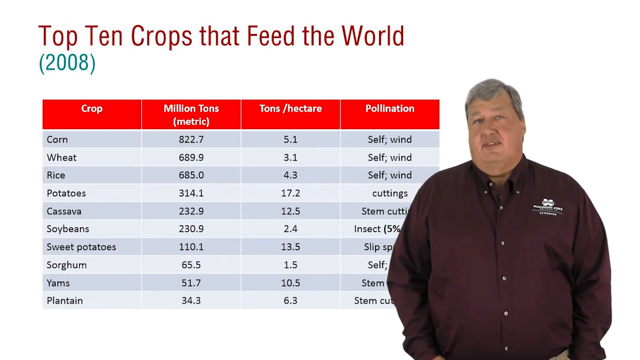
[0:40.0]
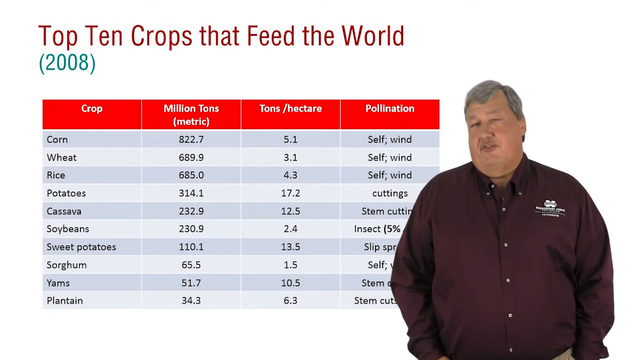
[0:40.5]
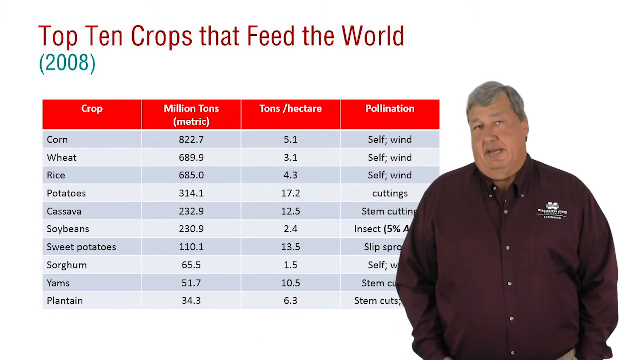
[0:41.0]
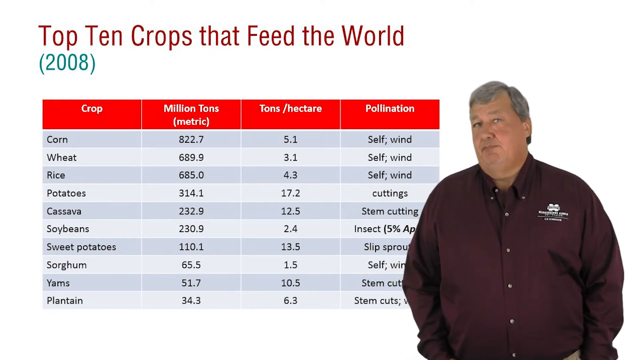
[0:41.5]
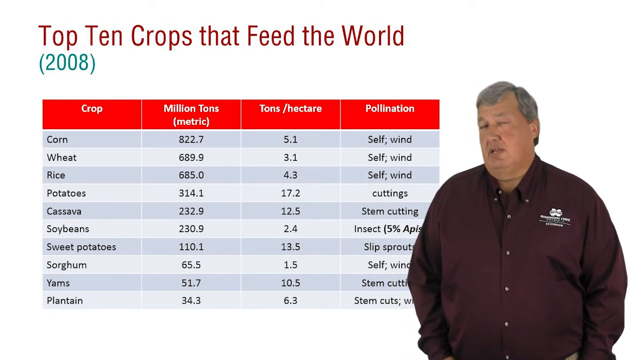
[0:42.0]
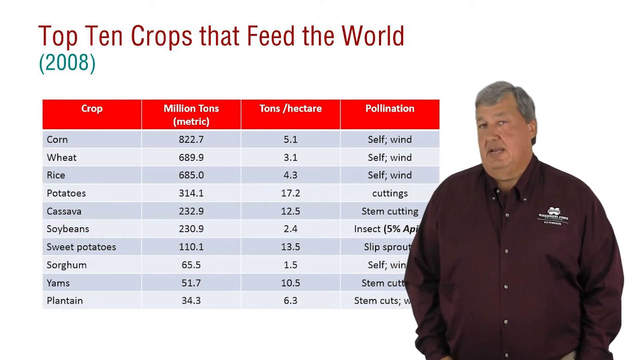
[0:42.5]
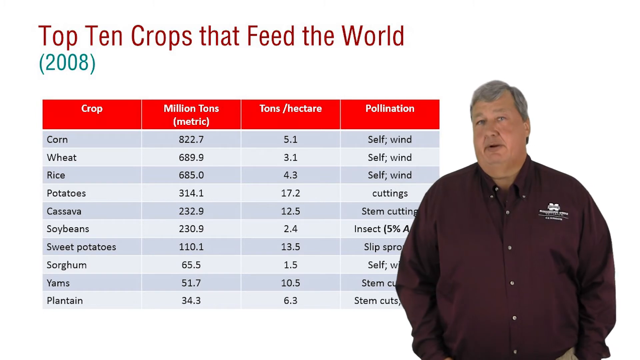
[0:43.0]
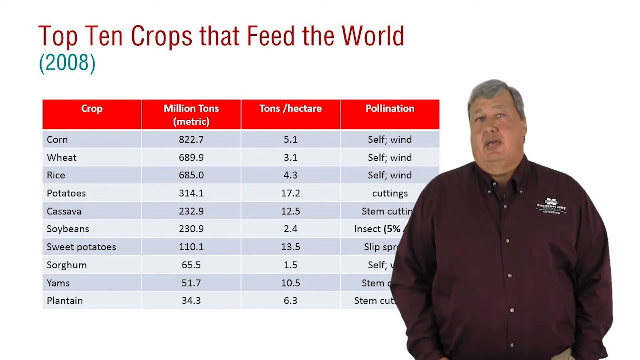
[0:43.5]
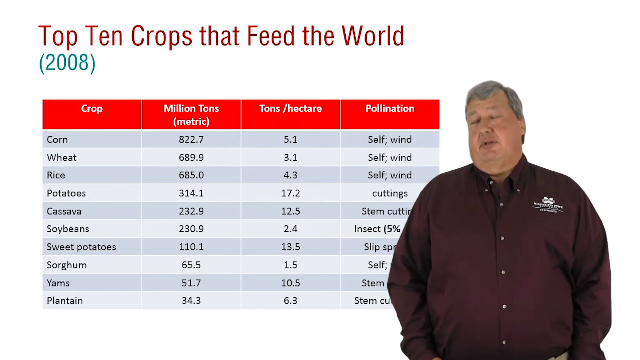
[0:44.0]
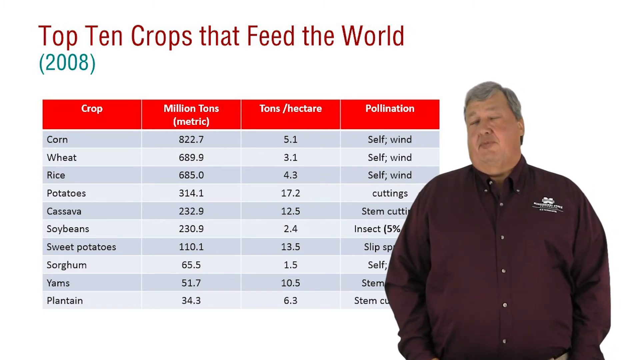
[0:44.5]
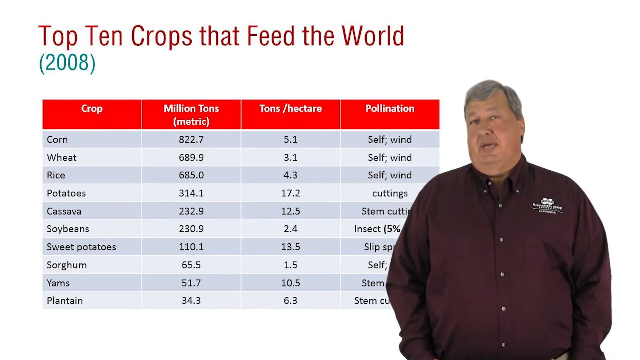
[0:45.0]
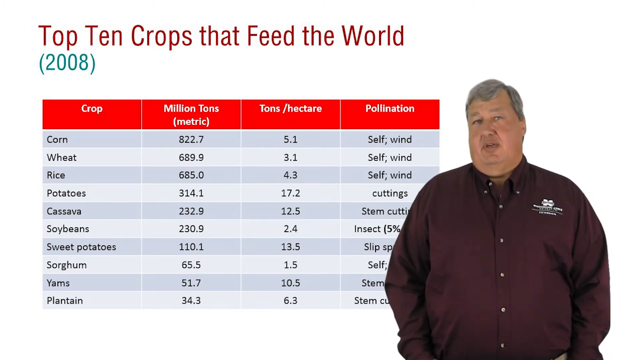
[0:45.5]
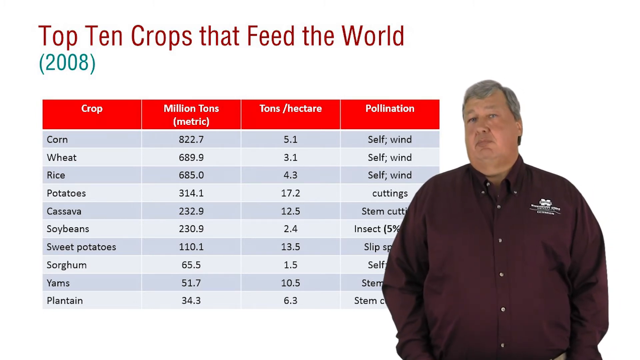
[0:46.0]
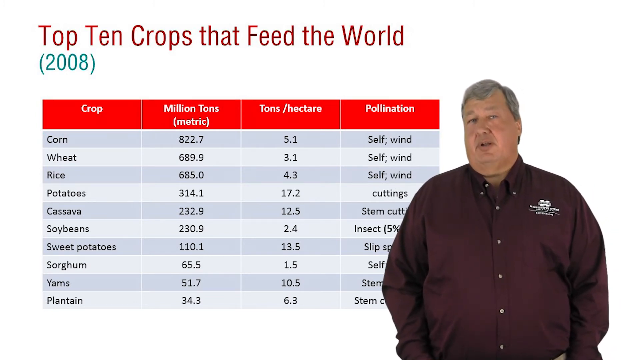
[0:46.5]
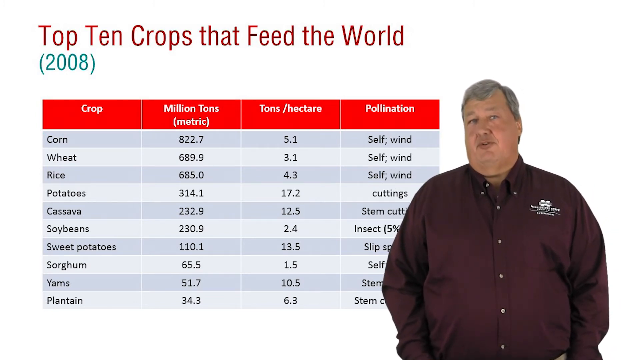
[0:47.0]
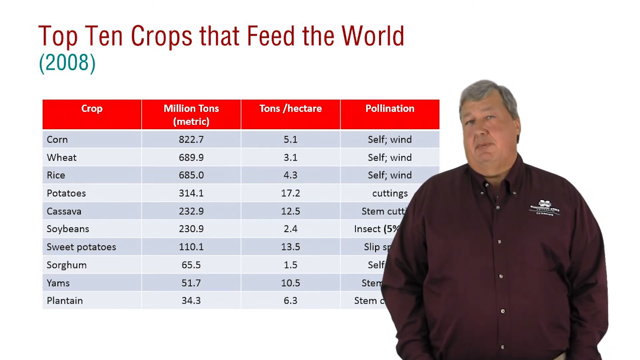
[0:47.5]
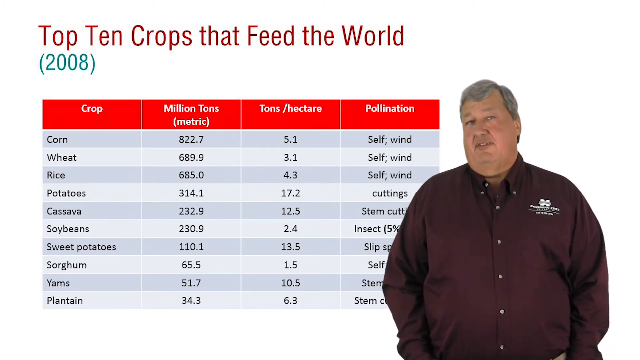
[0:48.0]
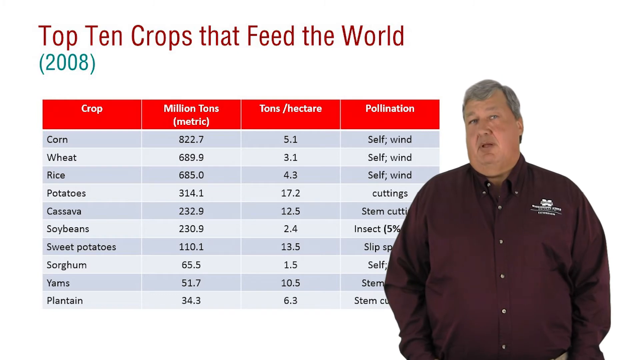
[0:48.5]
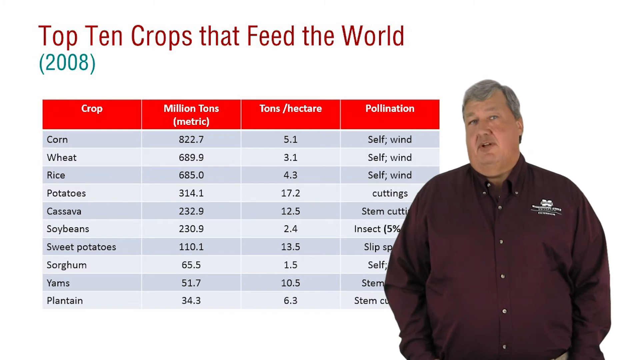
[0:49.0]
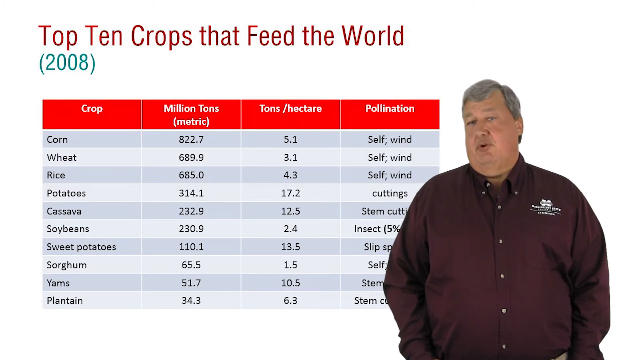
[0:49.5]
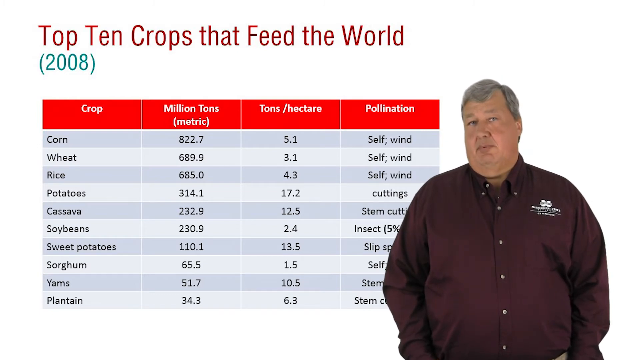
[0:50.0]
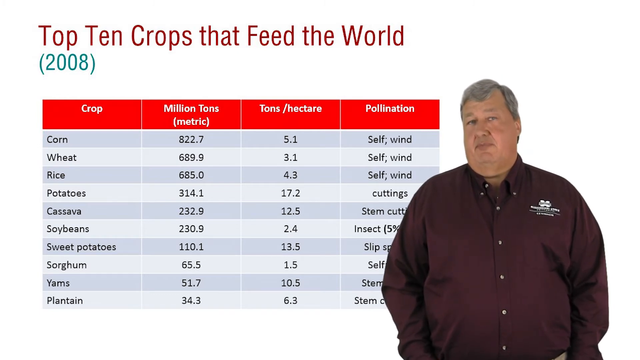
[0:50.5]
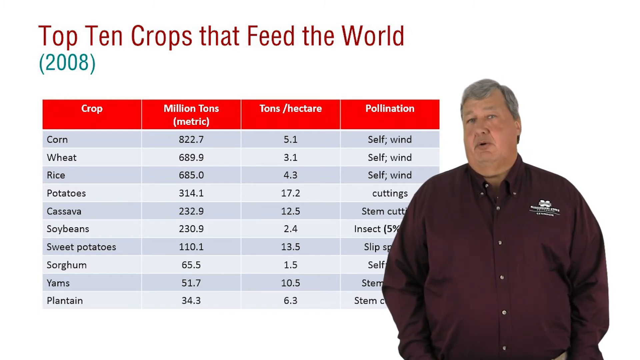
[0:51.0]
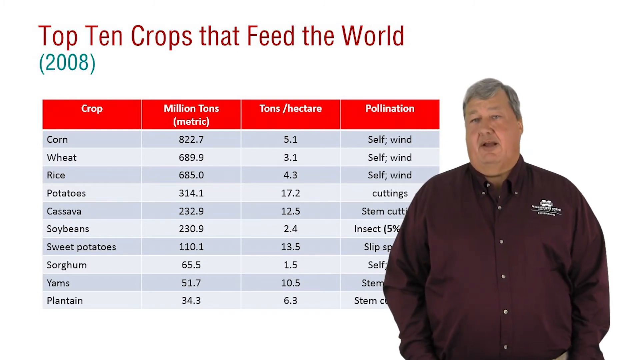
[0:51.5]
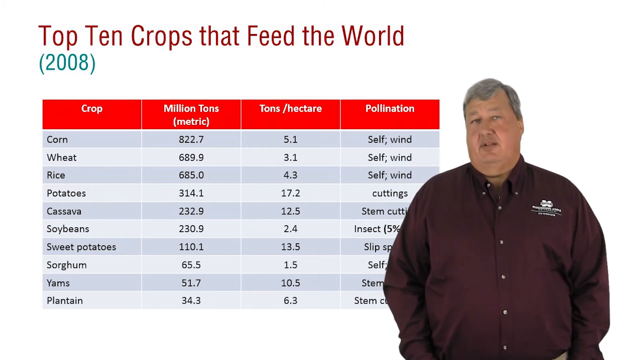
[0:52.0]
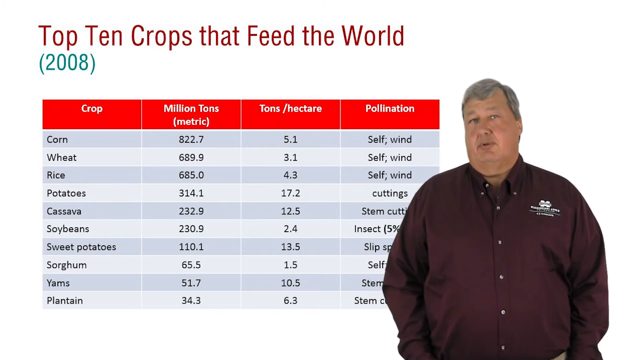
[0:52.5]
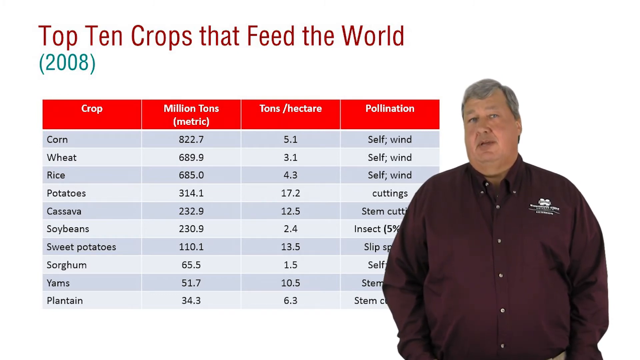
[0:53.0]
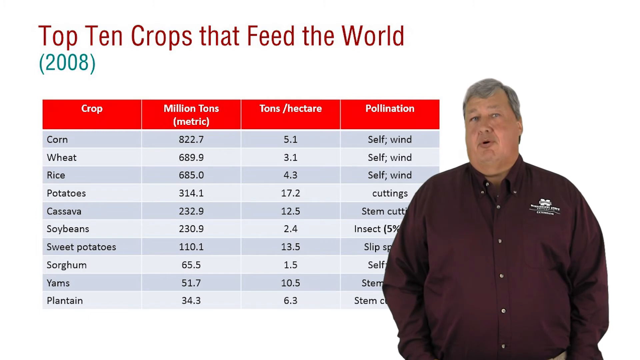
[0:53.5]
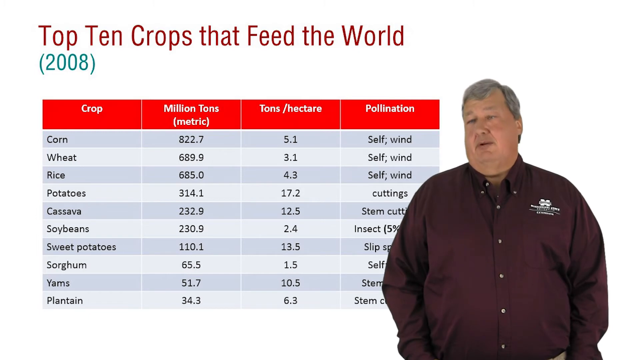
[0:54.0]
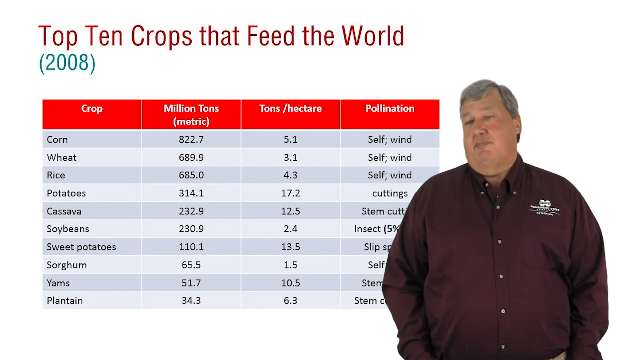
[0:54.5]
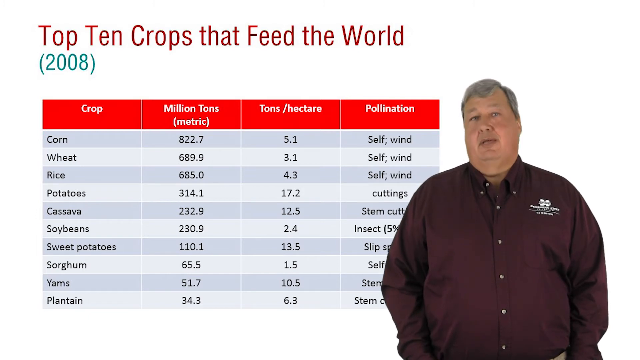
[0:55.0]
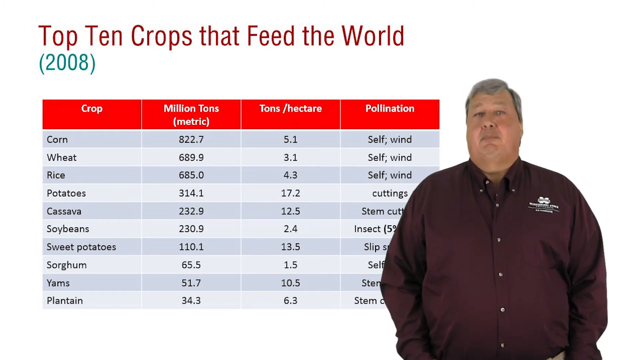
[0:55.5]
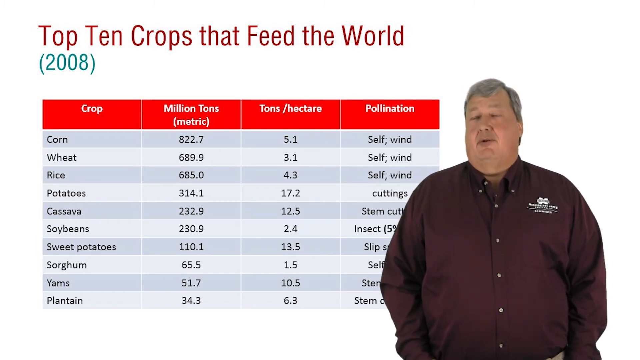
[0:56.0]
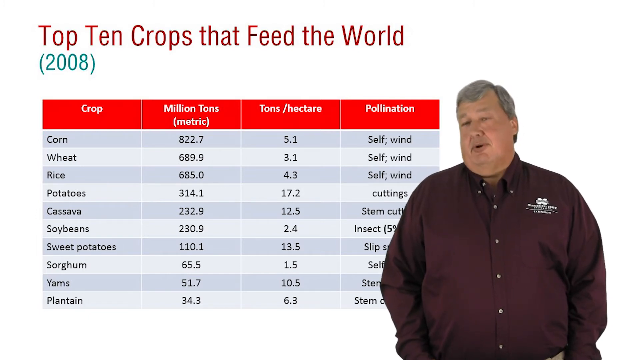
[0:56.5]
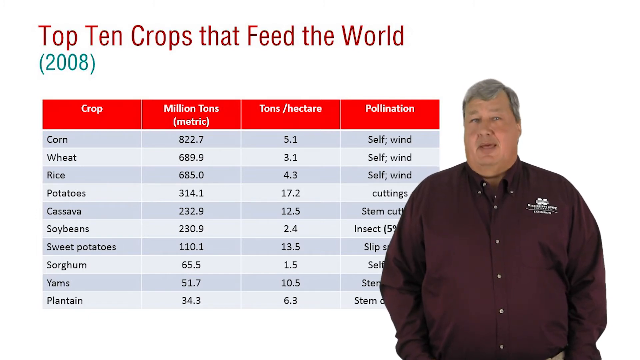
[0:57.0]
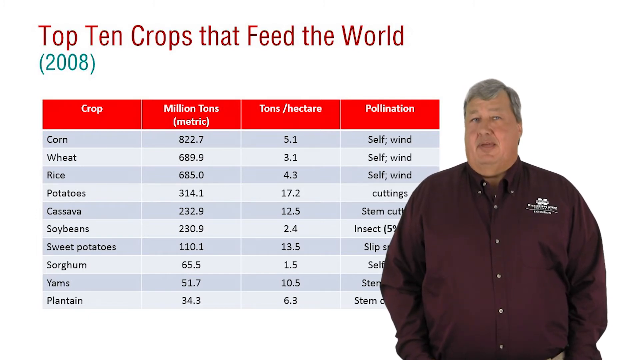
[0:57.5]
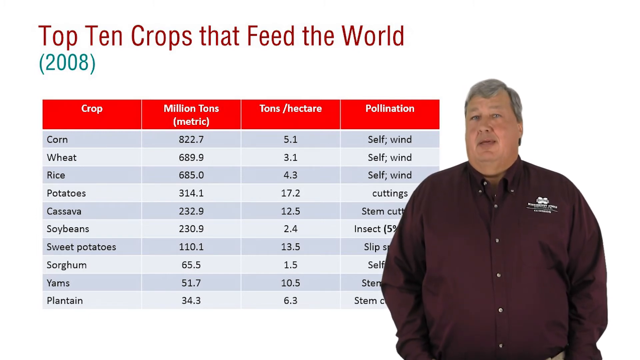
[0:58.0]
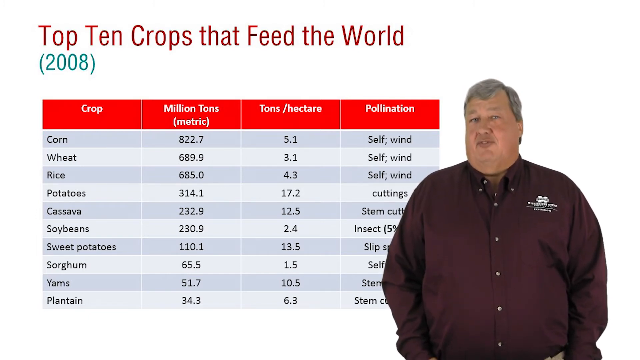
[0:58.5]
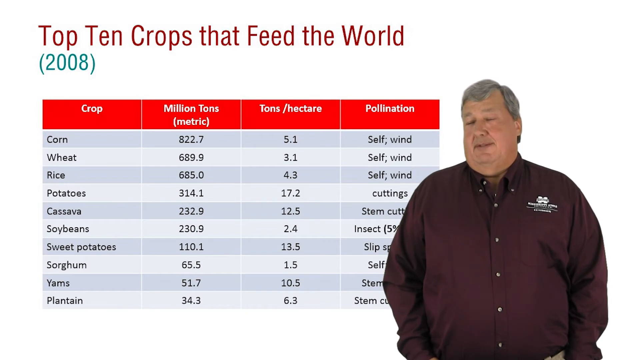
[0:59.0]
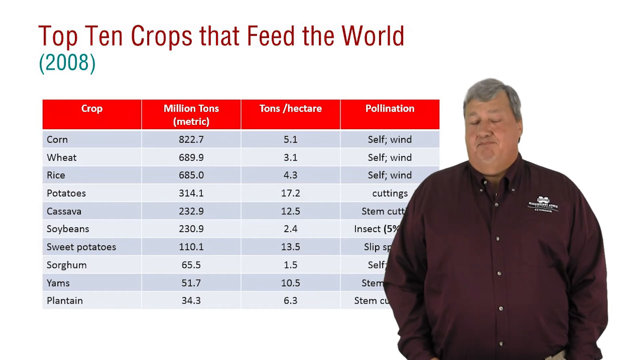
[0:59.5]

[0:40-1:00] On a white background, a heading at the top left in brown text reads "Top 10 Crops that Feed the World." Below it, to the left, in bright teal text, is "2008" in parentheses. Underneath is a chart listing different crops, how much of them are grown, and their pollination type. At the top are red boxes with labels in white text: "crop," "million tons," "tons/hectare," and "pollination." Under crop are rows with crop names such as corn, wheat, rice, potatoes, cassava, soybeans, sweet potatoes, sorghum, yams, and plantains, and each column shows the measurements for these crops. On the right side of the screen, a man is seen from the waist up, speaking and giving a presentation. He is an older man who looks to be about 50, large and heavy, wearing a dark maroon shirt with a white logo on his left chest. He keeps his hands down by his sides as he speaks to the camera.